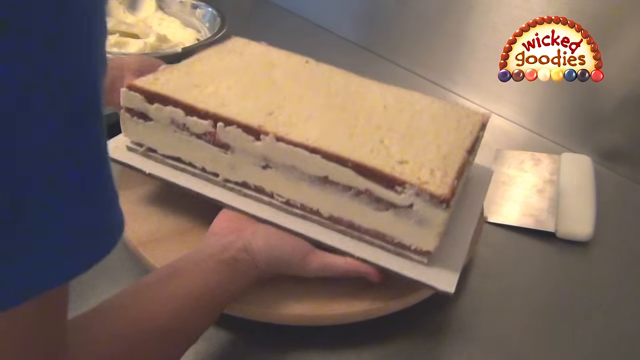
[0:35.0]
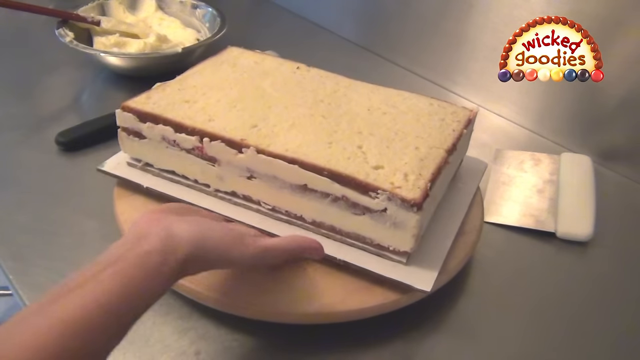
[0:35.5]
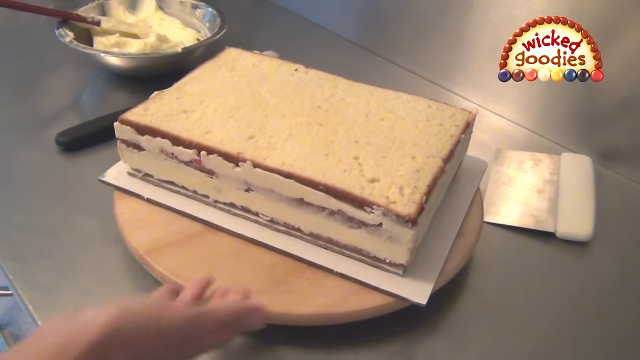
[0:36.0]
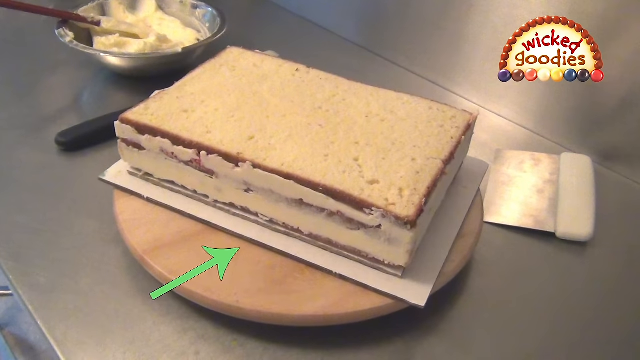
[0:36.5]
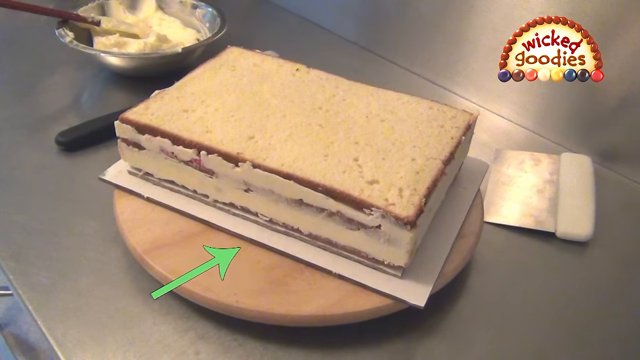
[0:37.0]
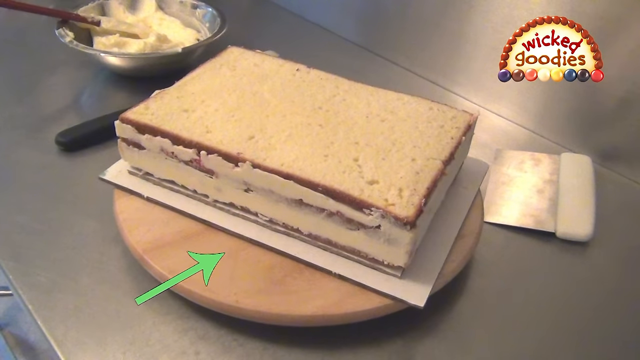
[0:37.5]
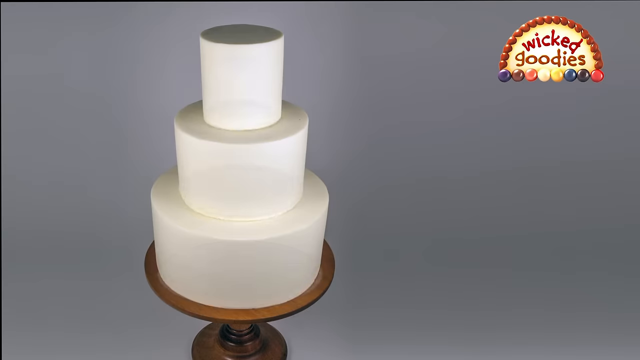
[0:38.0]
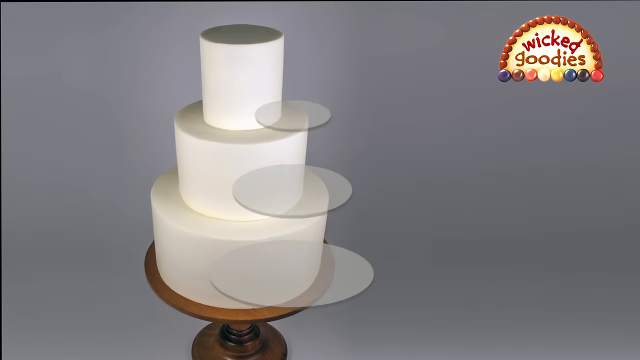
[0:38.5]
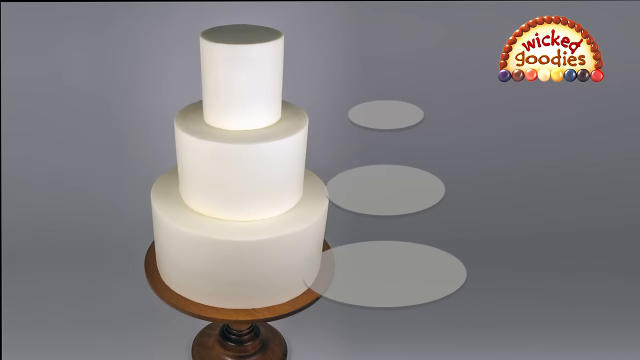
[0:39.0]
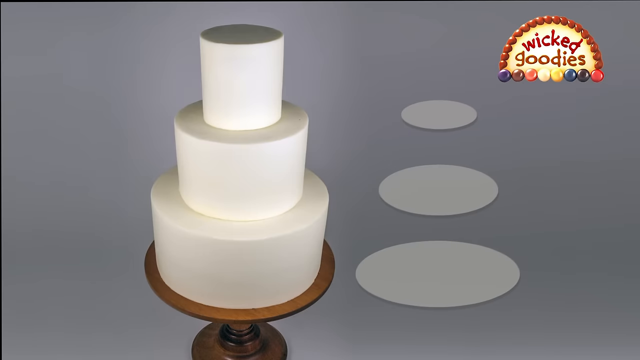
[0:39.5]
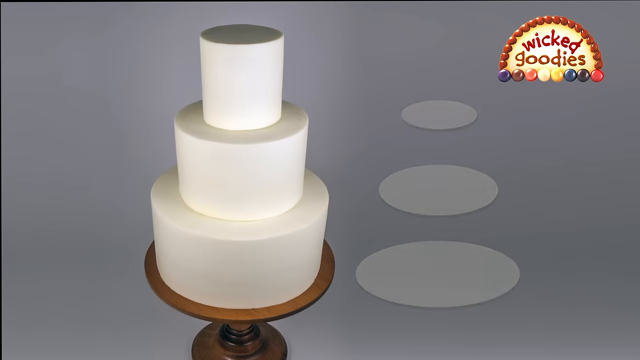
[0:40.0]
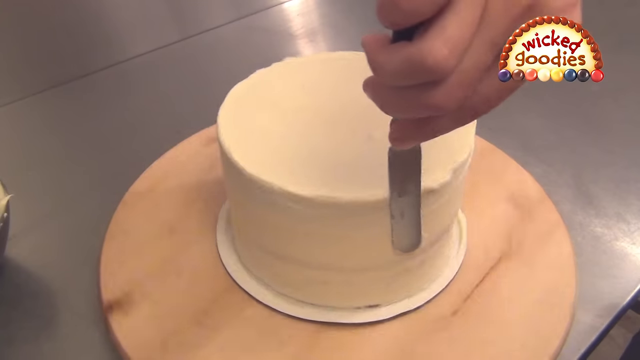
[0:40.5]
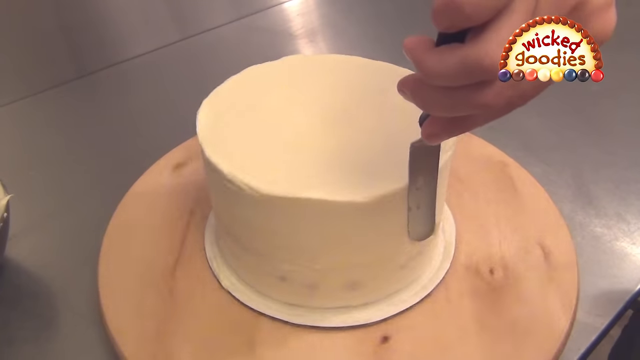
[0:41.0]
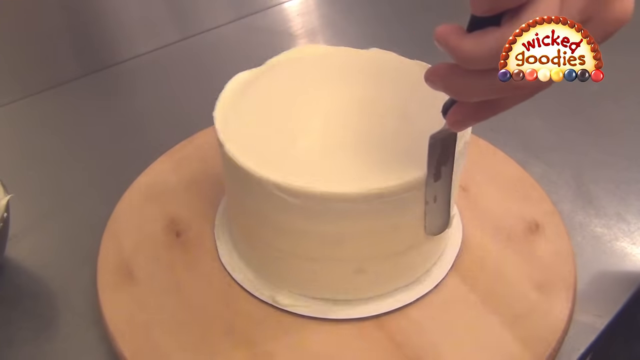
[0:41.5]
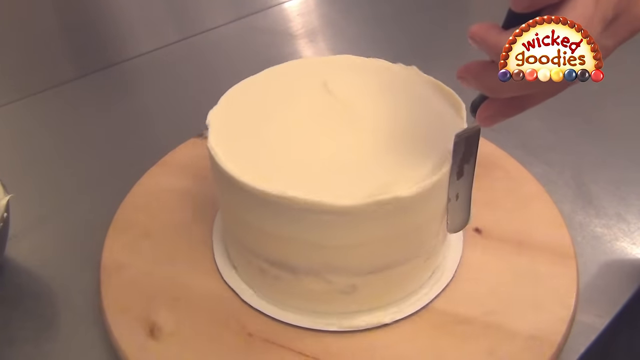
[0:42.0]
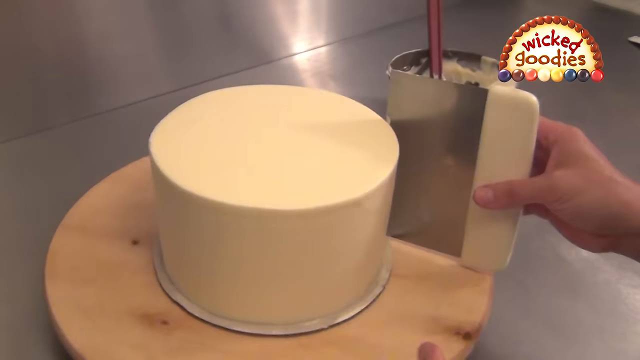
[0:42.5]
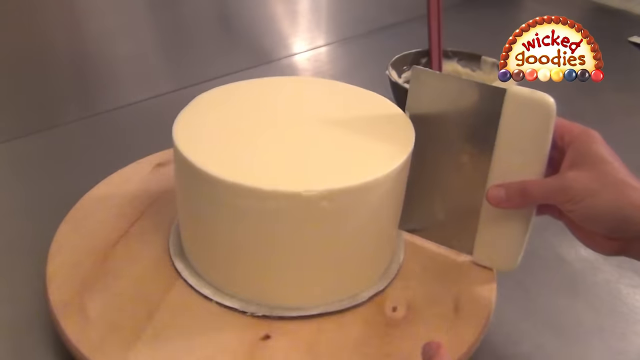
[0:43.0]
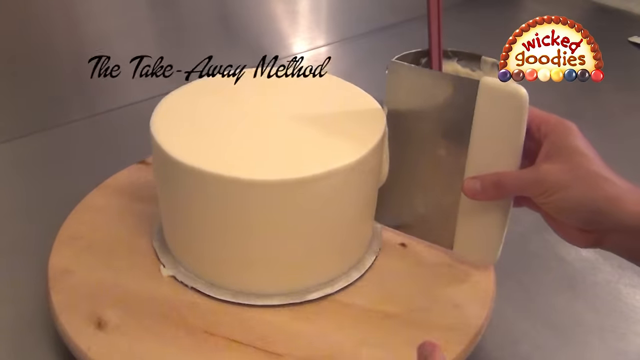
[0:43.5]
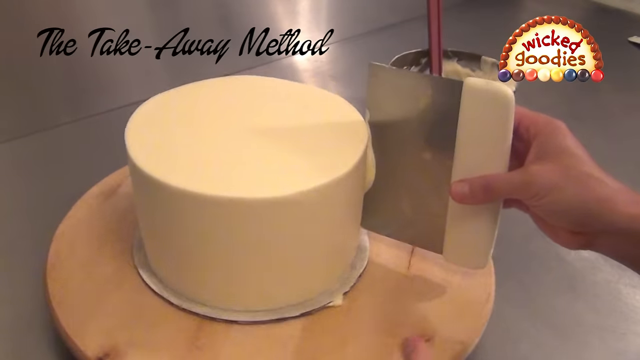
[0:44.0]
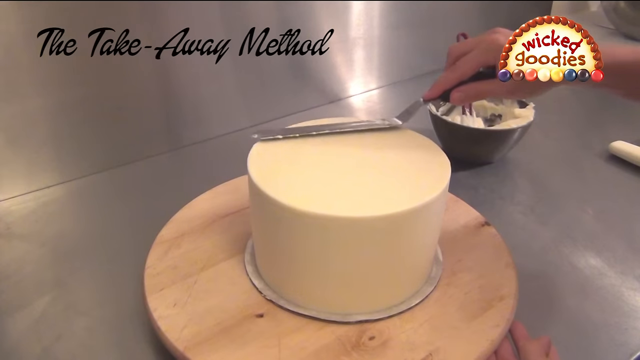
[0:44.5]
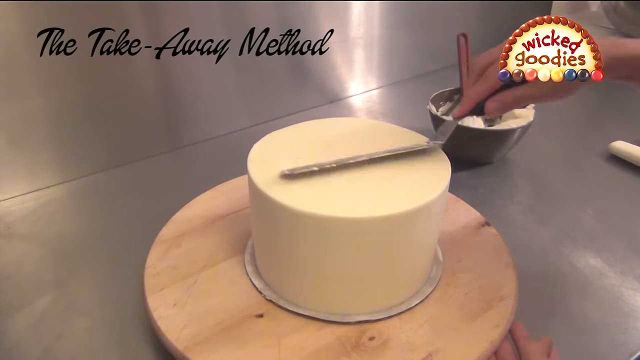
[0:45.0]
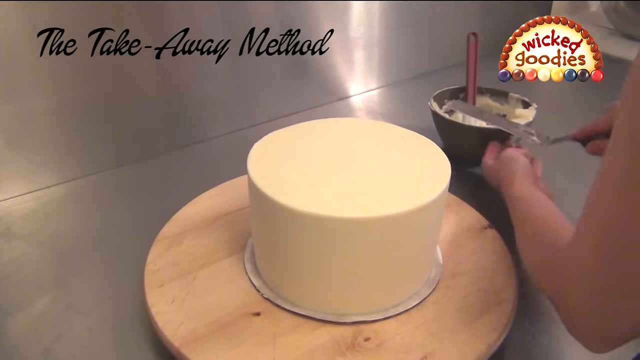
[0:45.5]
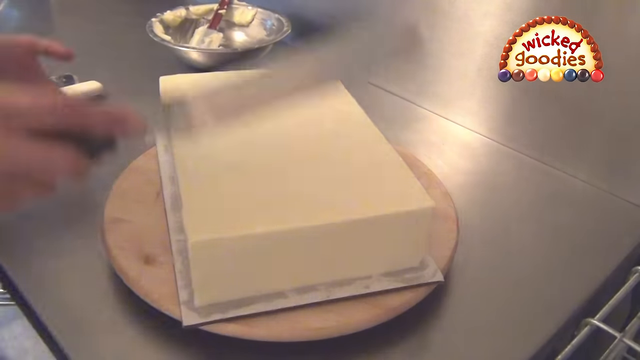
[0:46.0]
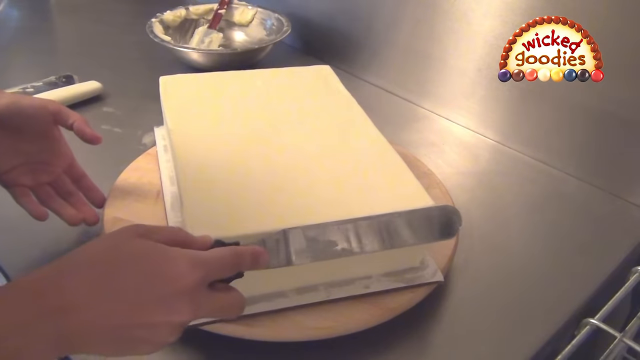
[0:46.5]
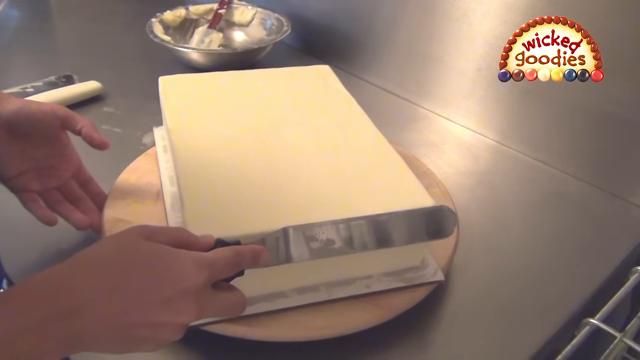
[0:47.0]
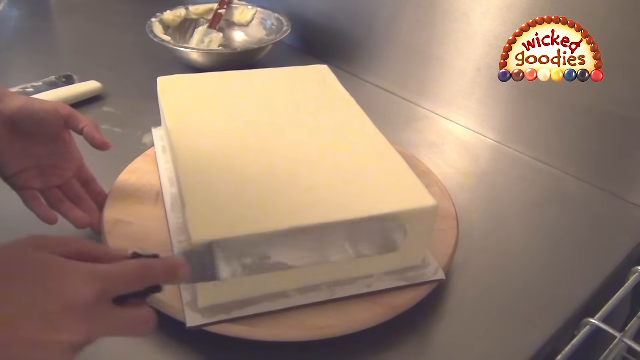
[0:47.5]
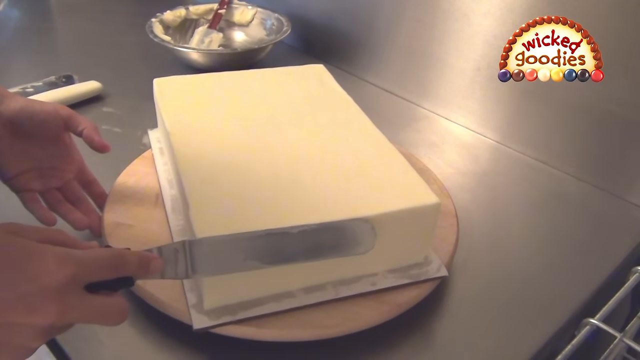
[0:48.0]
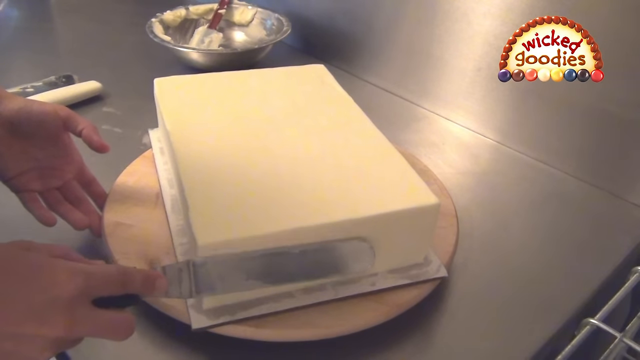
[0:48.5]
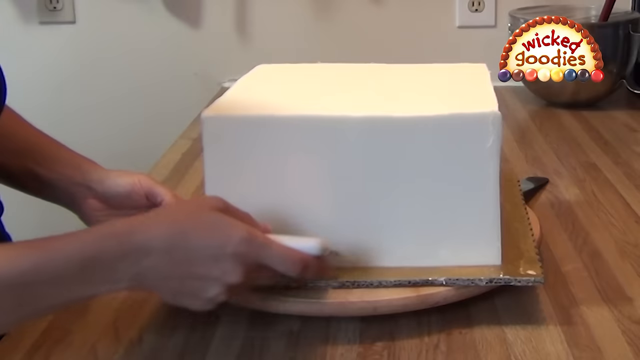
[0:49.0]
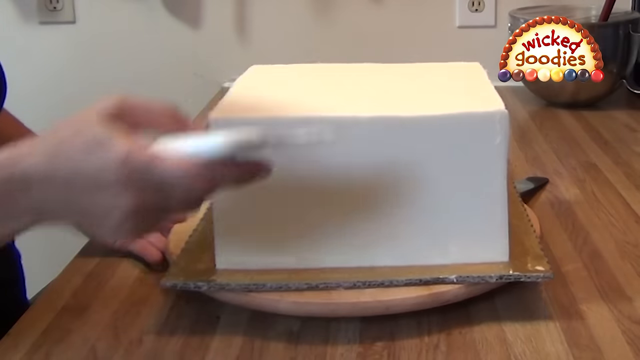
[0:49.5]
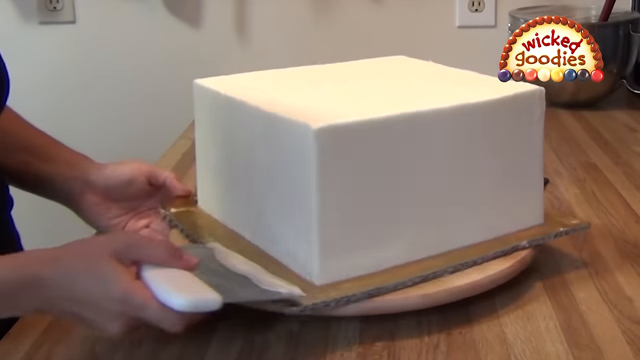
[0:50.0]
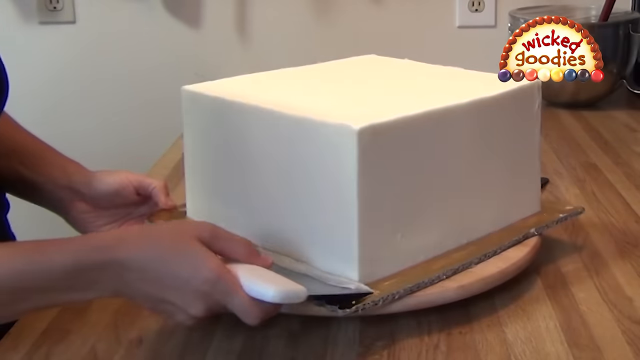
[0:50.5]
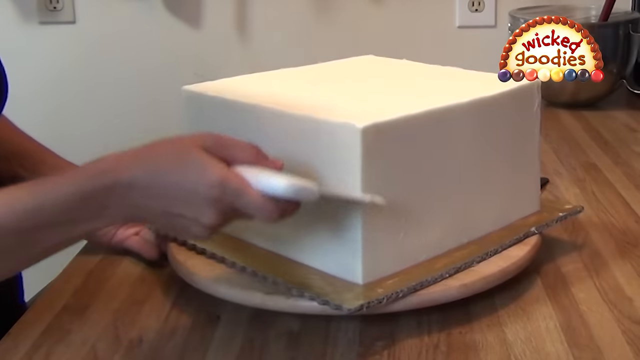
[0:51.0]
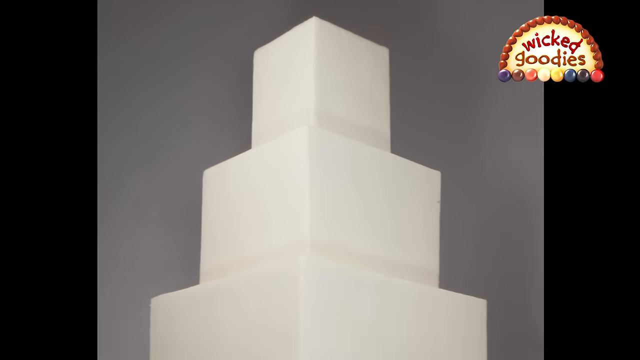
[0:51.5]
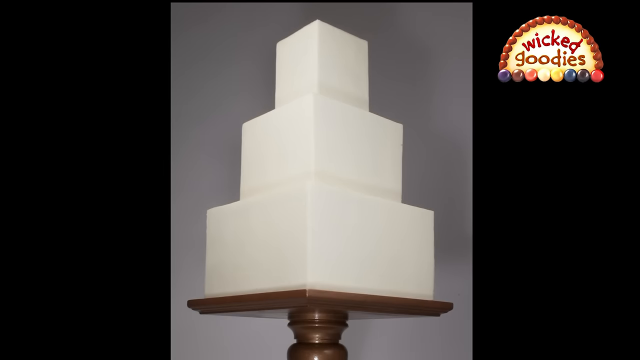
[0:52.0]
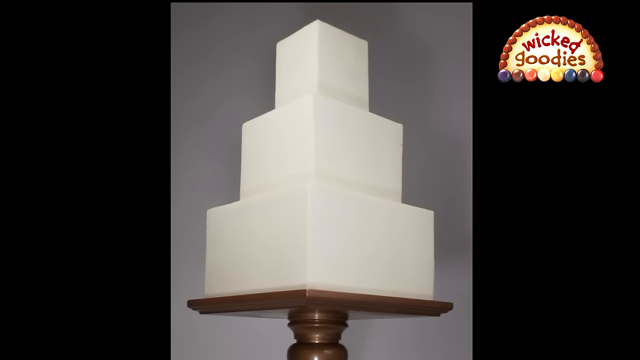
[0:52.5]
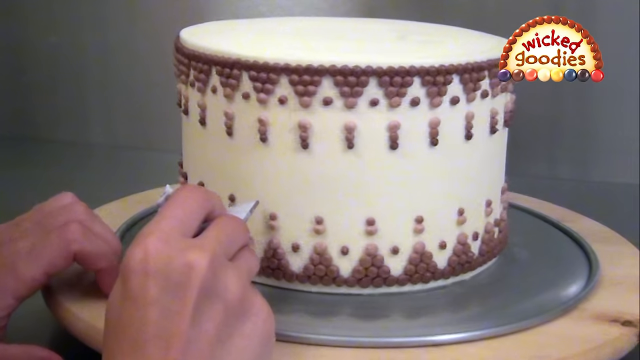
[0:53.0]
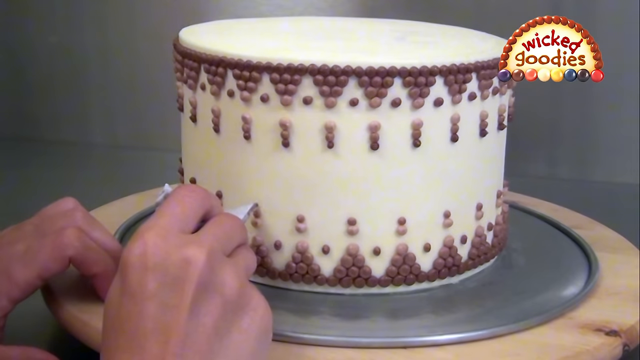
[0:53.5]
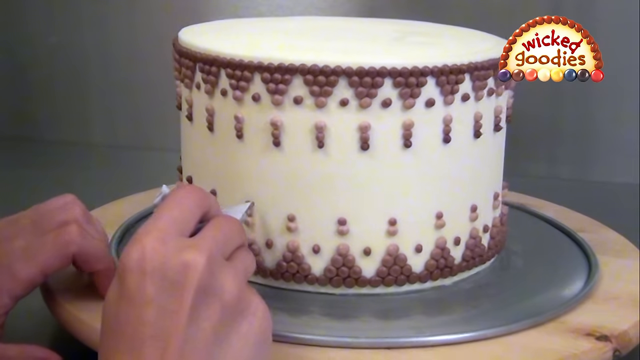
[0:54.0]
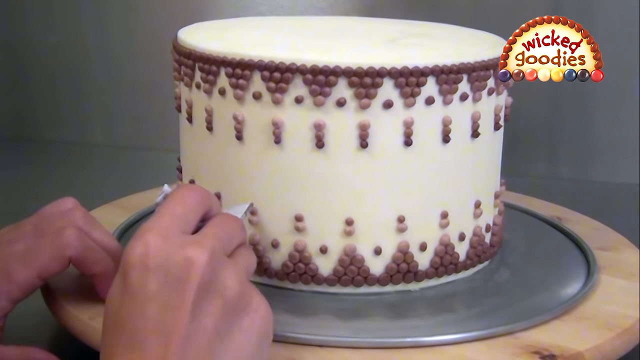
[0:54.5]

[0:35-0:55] A three-layer cake that looks to be a regular vanilla cake has a bit of frosting or filling between each layer, of an unclear kind, and a thin layer of frosting around this pretty large rectangular cake. The cake is on a white board on top of a wooden cake mover, and a green arrow points toward the white cardboard underneath the cake. The image changes to a three-tier cake: the bottom is a very large white circle cake, the center a medium-sized one, and the top a small white cylinder cake. Someone with a frosting spreader turns the wooden wheel underneath and spreads the frosting evenly all around the cake pretty quickly, and another cake spreading tool is used in what is called the takeaway method. Once the frosting is evenly distributed, a cake spreader skims the top of the cake, and a metal bowl with frosting in it is next to the cake. The video returns to the large square cake, where the frosting has already been distributed evenly and the person is doing the finishing touches of taking away excess frosting. Next, someone smooths buttercream frosting on a rectangular cake that seems pretty large, possibly four or five layers, which transitions into a three-tier rectangle cake. Then someone puts very intricate small pearl-like frosting dots on top of a white cake; the dots appear to be a mix of pink and red, possibly maroon, though they could also be purple.